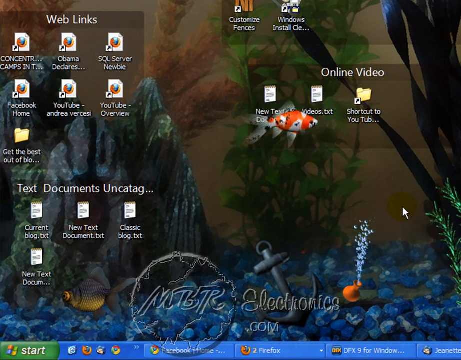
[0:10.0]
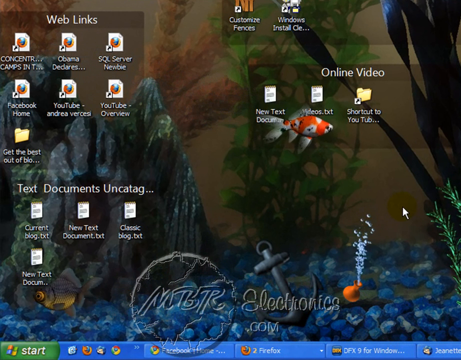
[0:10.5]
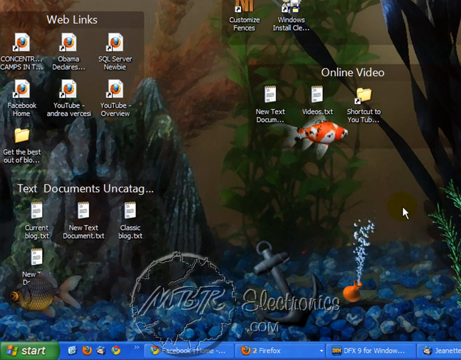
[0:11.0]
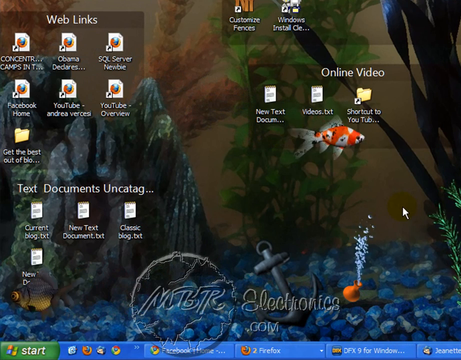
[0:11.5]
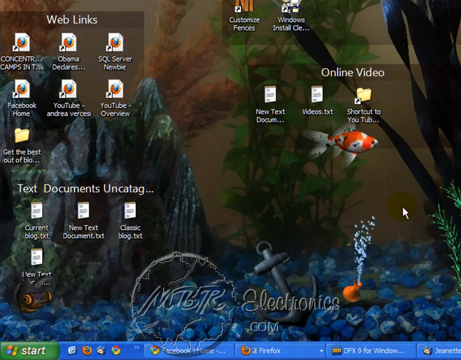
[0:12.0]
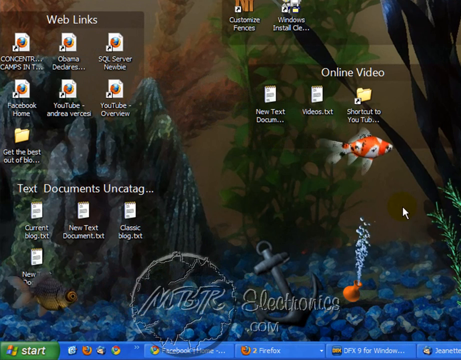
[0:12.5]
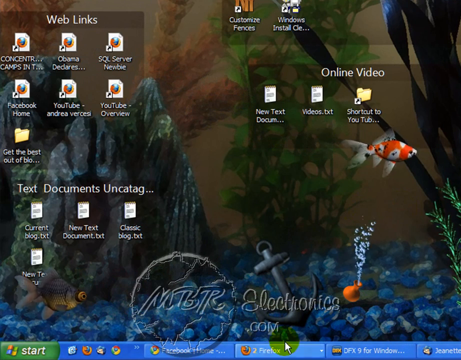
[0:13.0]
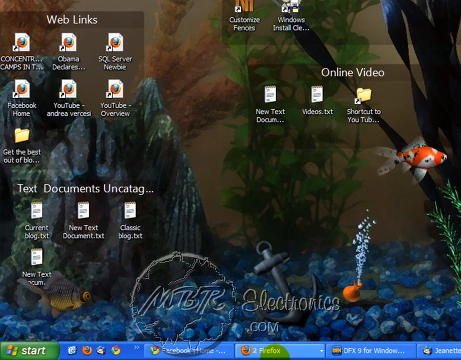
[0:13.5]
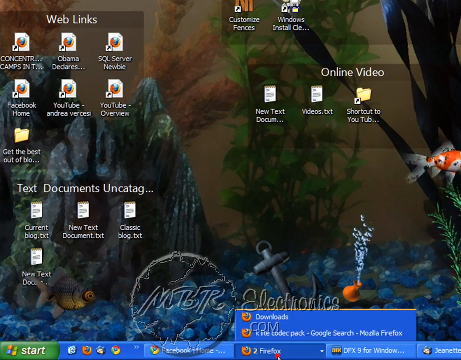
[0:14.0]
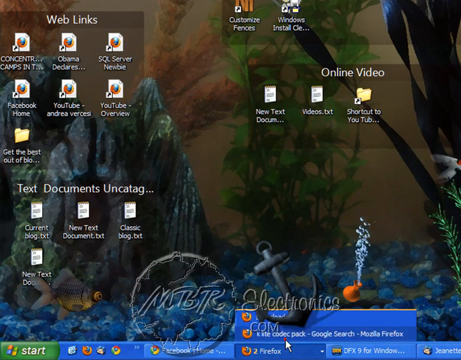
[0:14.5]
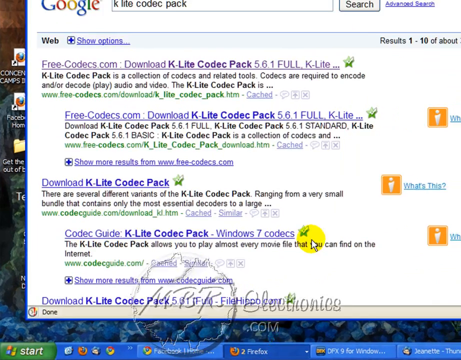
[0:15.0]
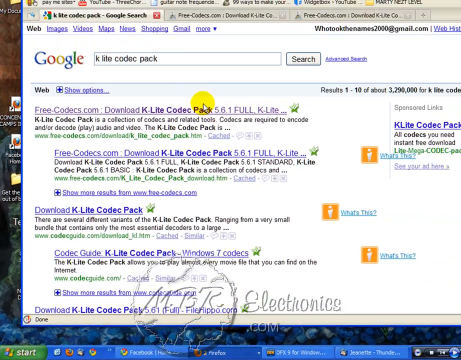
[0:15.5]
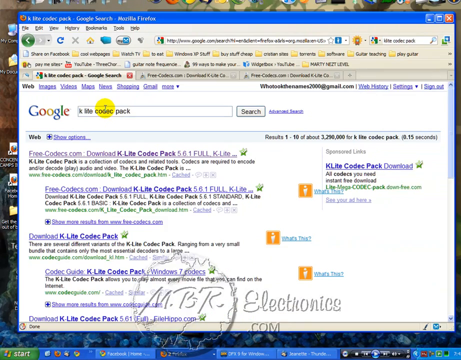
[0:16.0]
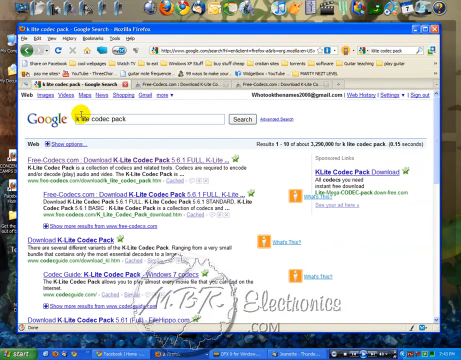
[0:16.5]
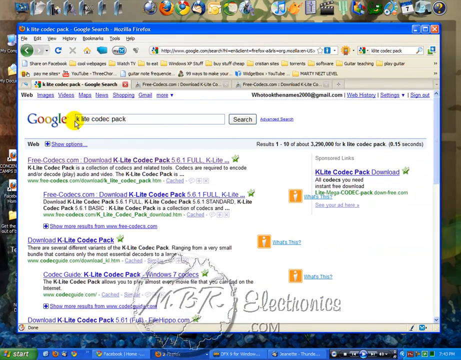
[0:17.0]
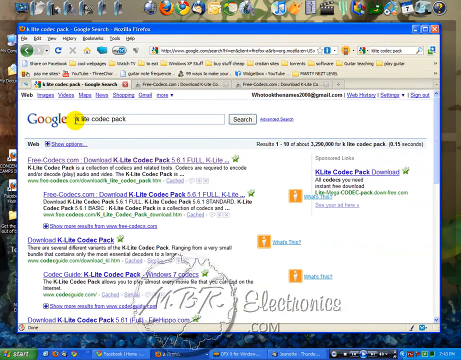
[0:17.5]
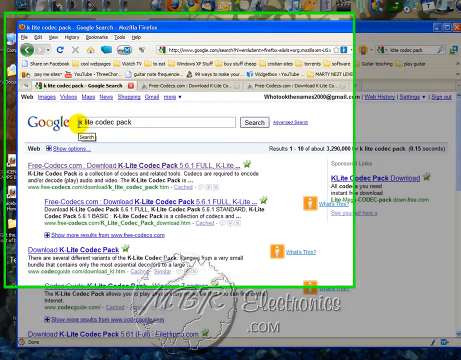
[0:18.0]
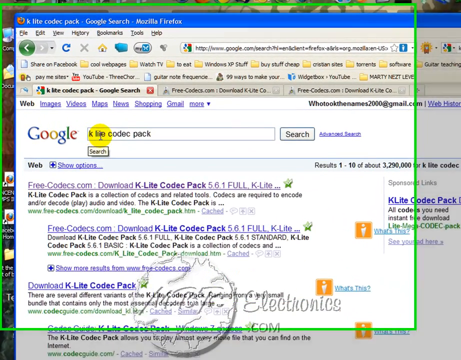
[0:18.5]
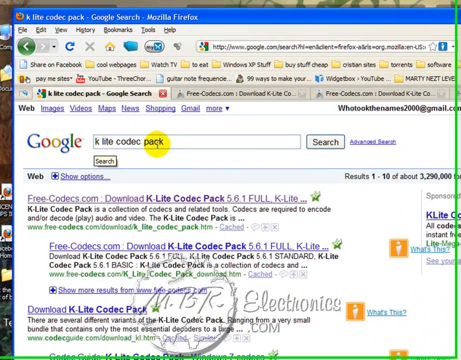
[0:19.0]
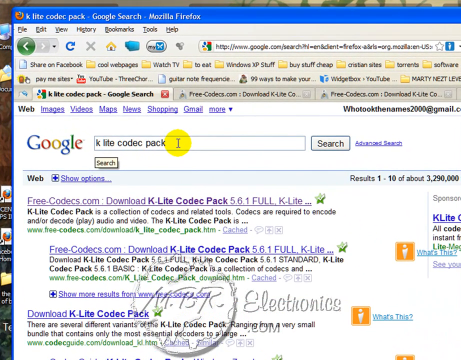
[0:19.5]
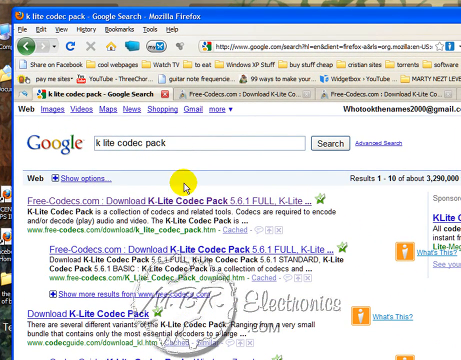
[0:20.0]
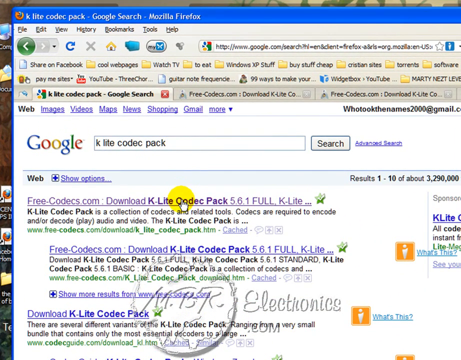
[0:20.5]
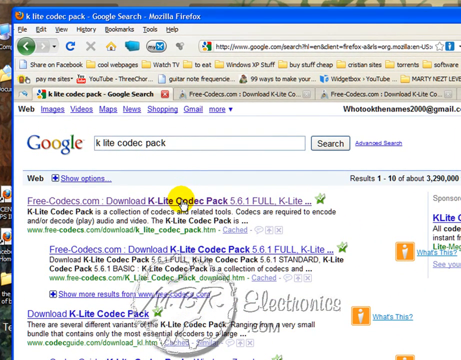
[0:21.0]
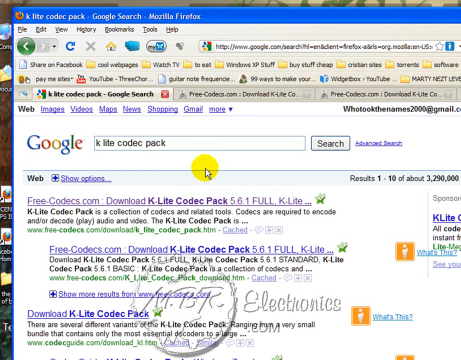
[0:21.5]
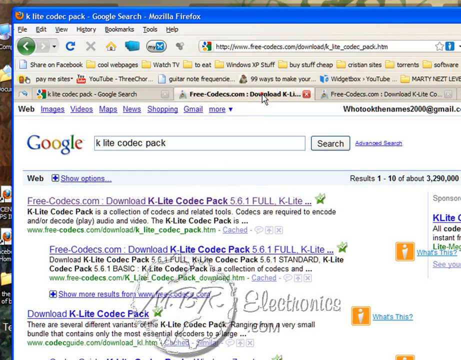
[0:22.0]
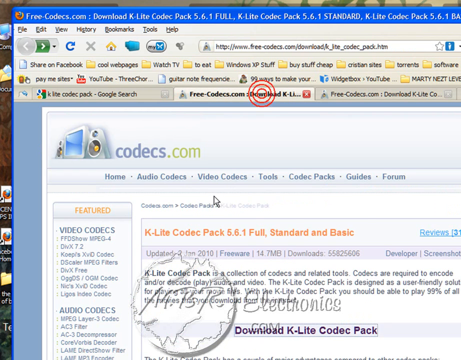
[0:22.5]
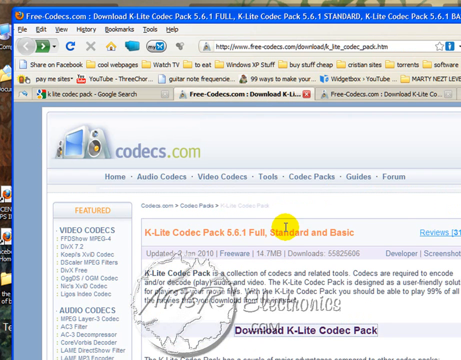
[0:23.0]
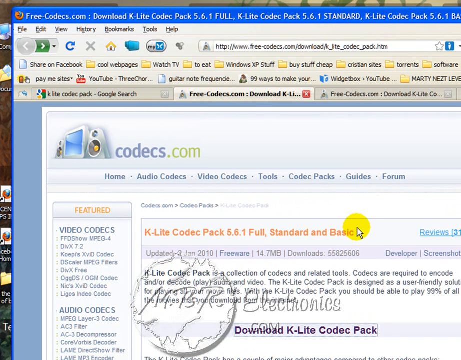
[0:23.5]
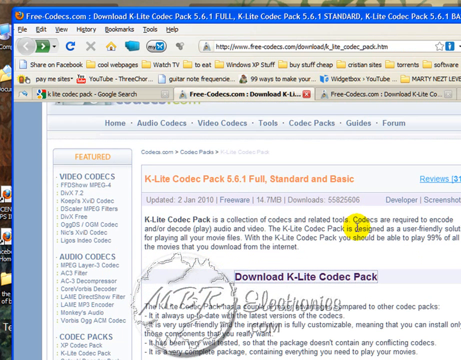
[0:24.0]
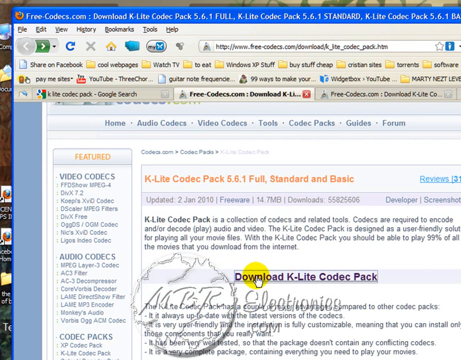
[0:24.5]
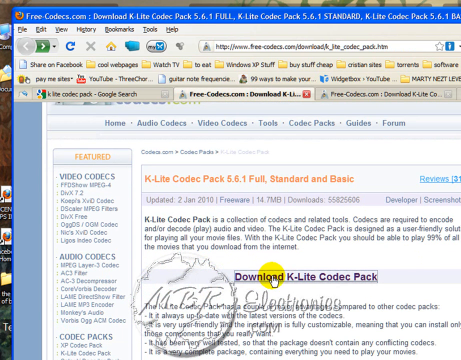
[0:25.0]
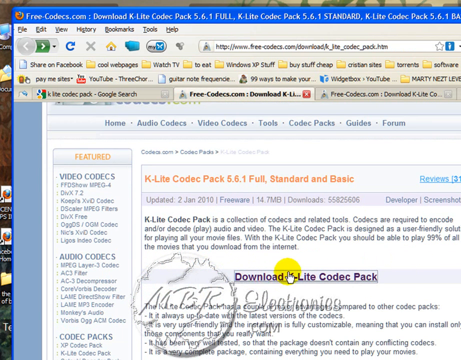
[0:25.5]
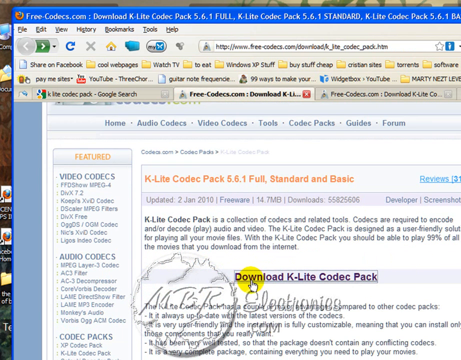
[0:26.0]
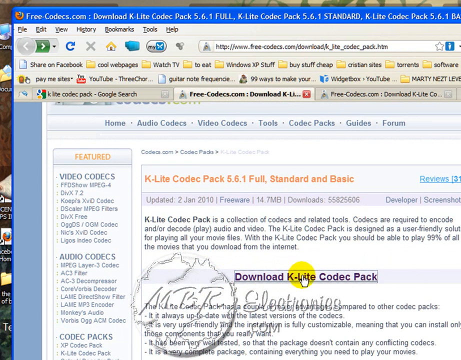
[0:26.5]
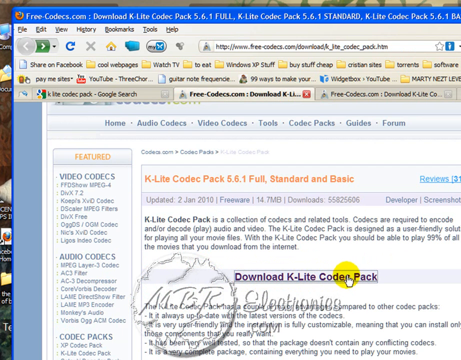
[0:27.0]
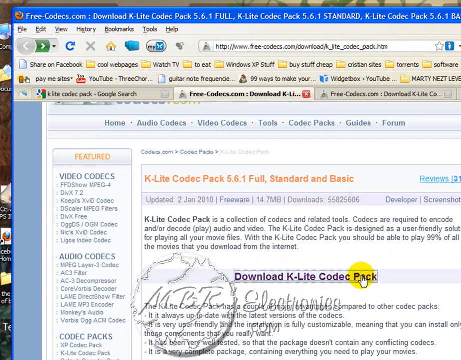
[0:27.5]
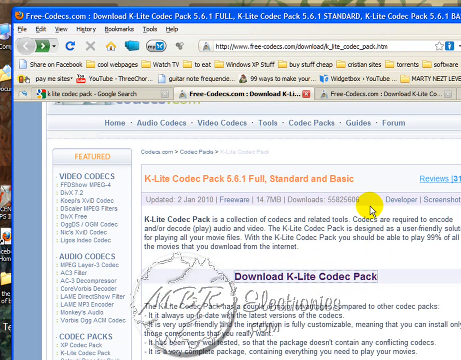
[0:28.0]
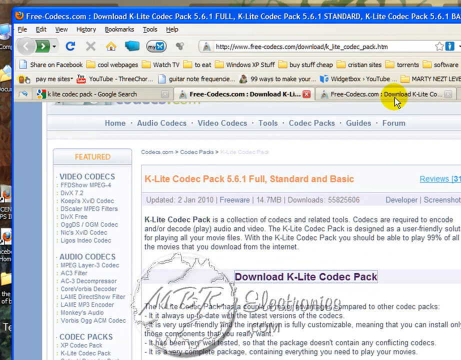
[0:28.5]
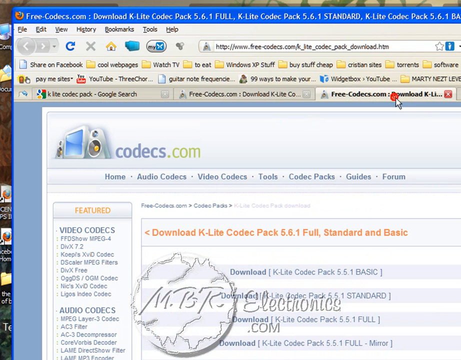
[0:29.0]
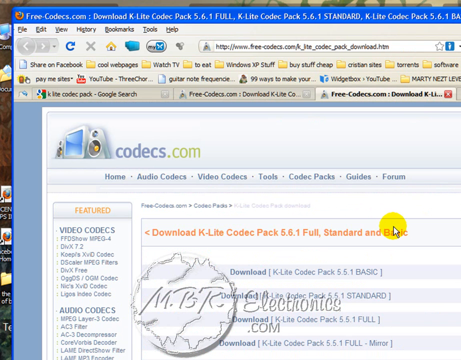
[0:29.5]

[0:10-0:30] In the Firefox browser, a search is run for "k light codex pack". The first result that appears reads "free codex dot com download k light codex pack" with a version number, and it is clicked, leading to the free codex.com site. The page is scrolled down to a "download k light codex pack" option, which is pressed to start the download.